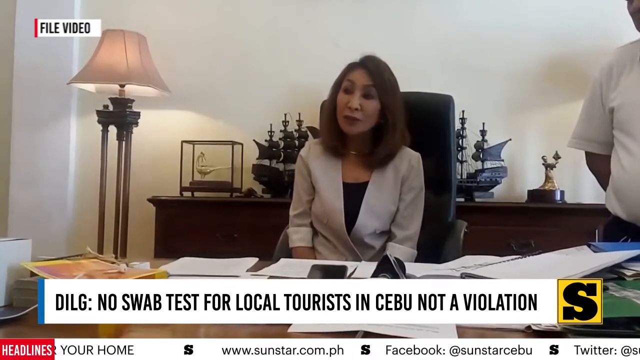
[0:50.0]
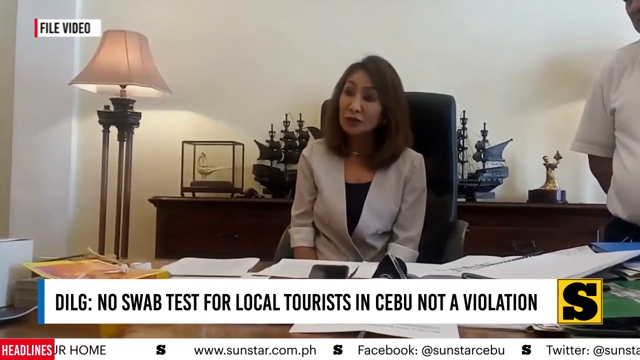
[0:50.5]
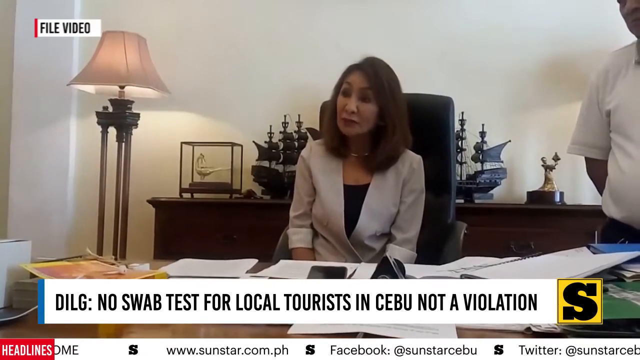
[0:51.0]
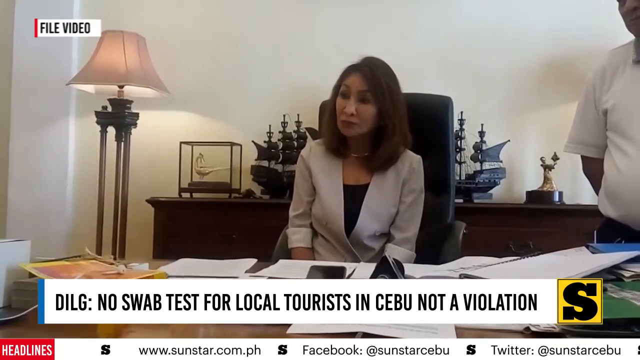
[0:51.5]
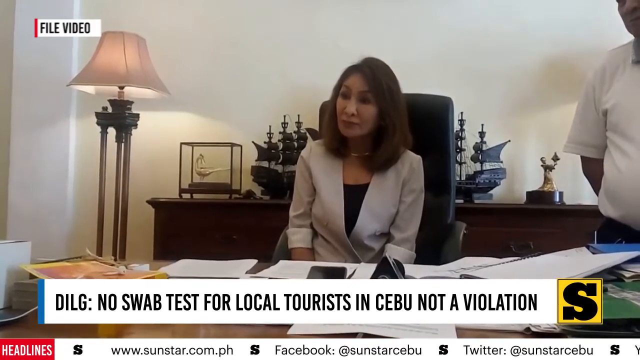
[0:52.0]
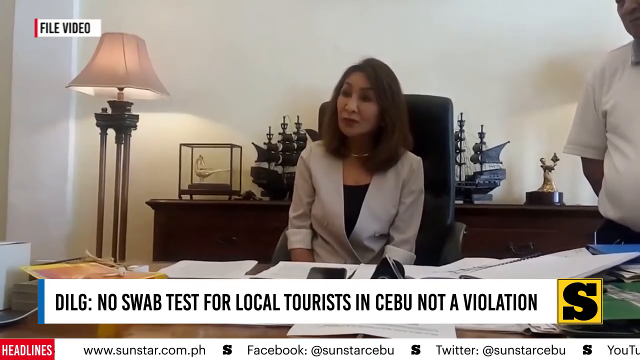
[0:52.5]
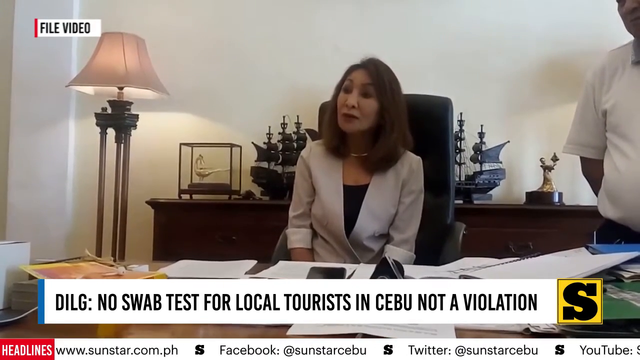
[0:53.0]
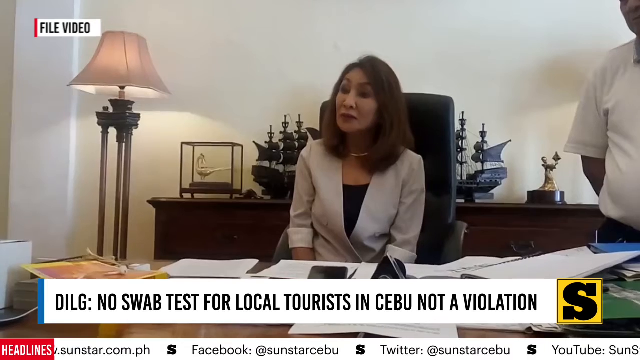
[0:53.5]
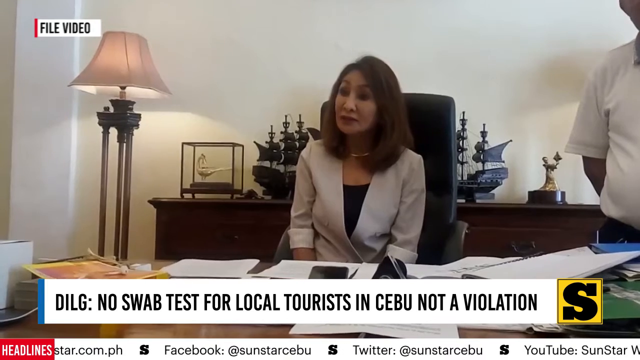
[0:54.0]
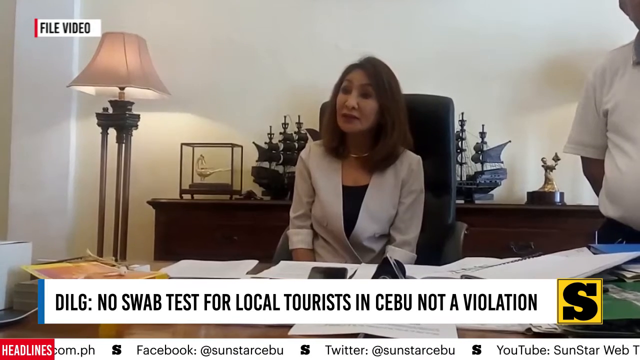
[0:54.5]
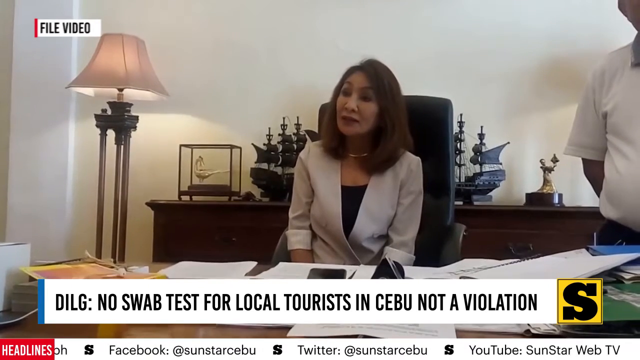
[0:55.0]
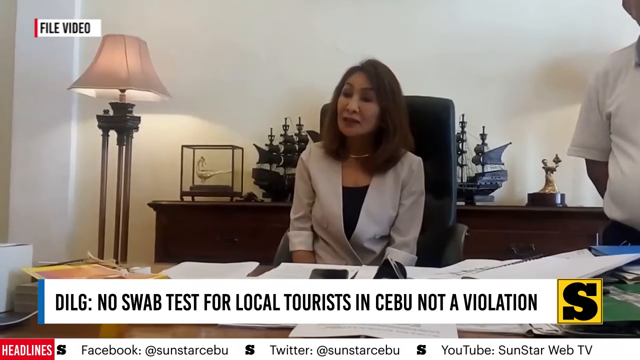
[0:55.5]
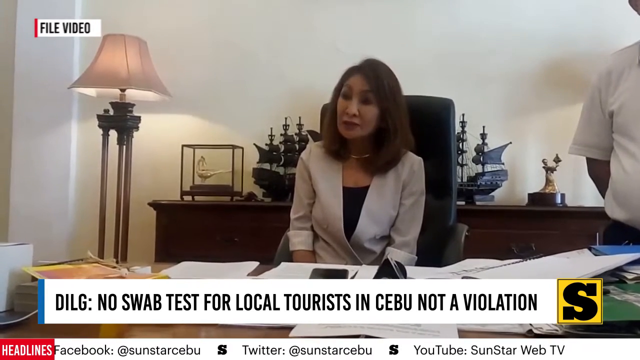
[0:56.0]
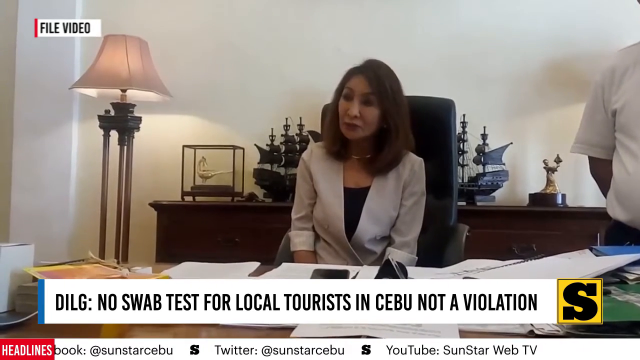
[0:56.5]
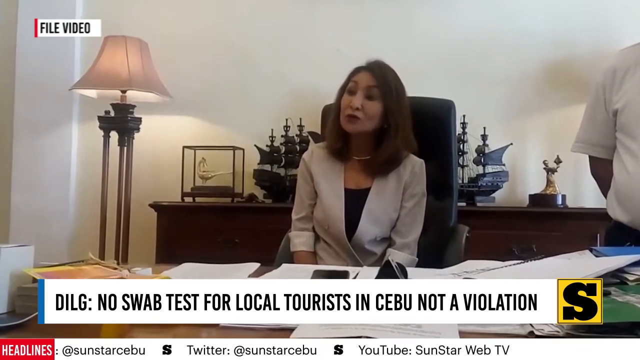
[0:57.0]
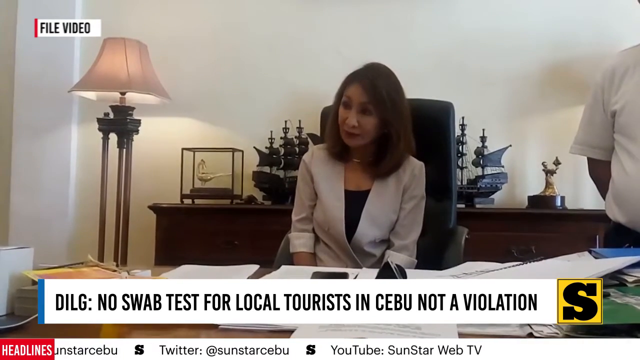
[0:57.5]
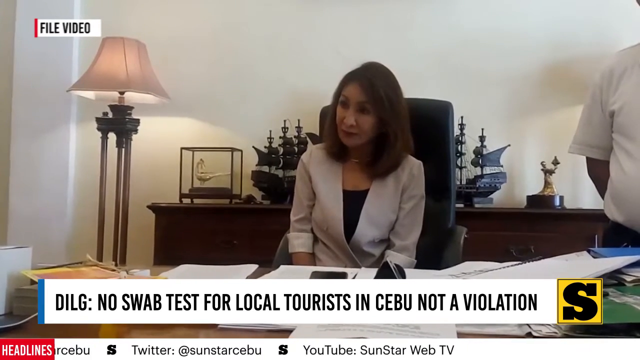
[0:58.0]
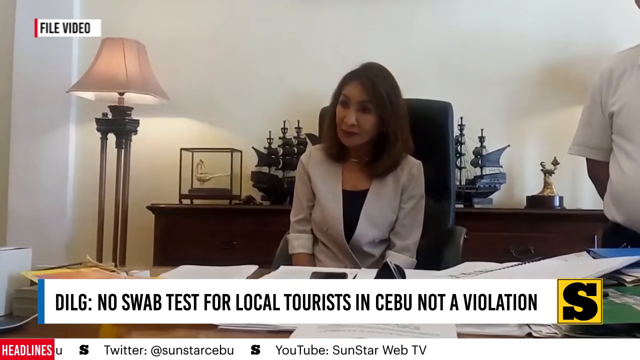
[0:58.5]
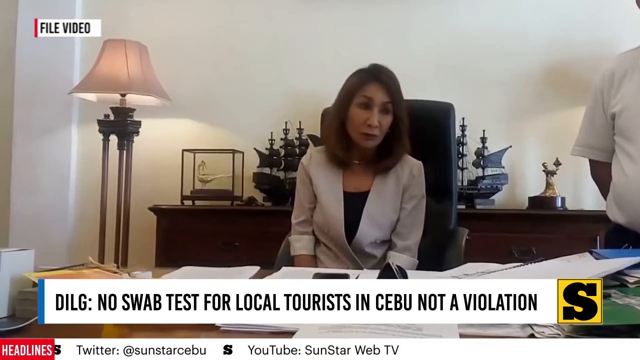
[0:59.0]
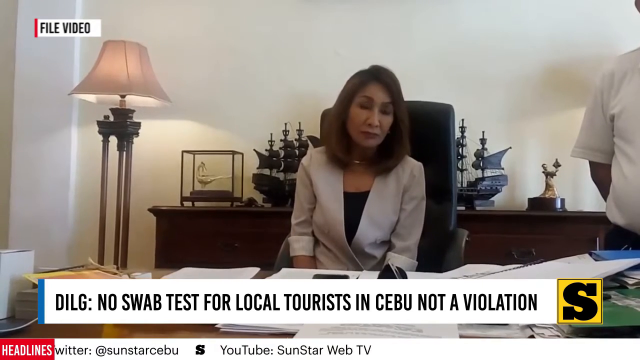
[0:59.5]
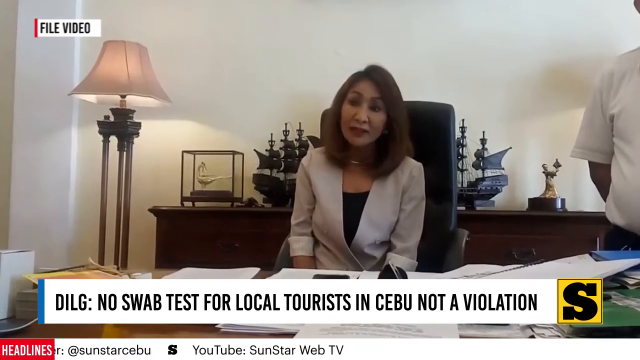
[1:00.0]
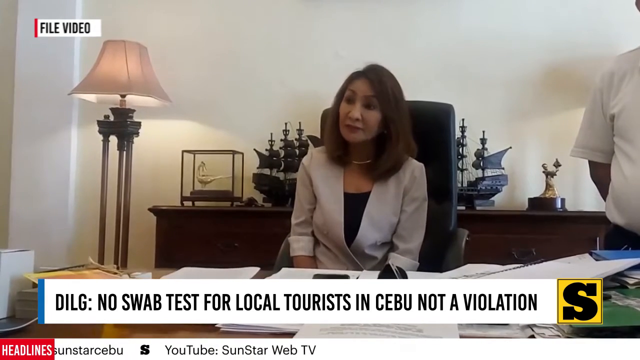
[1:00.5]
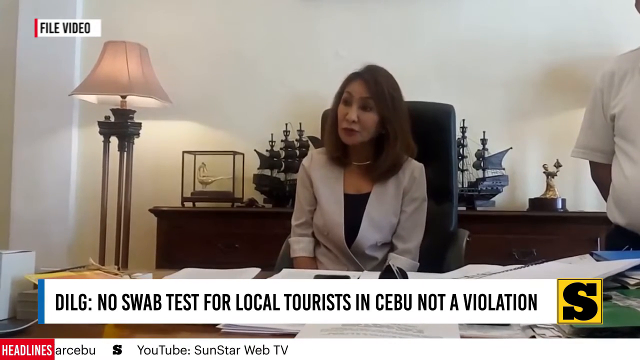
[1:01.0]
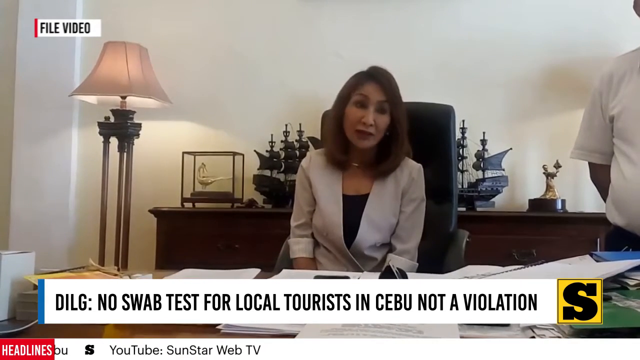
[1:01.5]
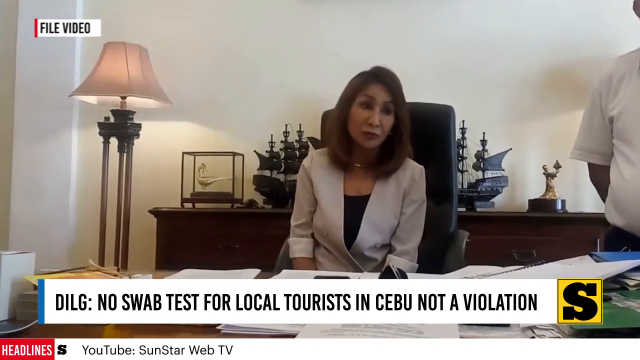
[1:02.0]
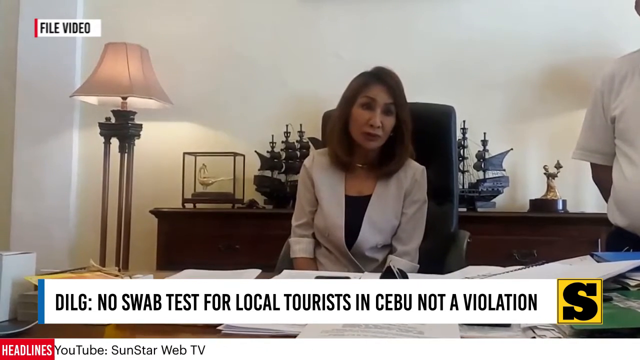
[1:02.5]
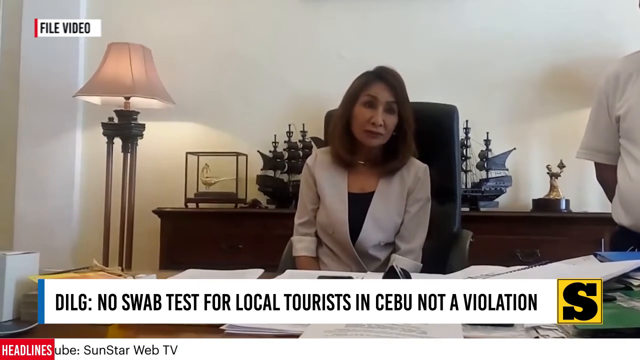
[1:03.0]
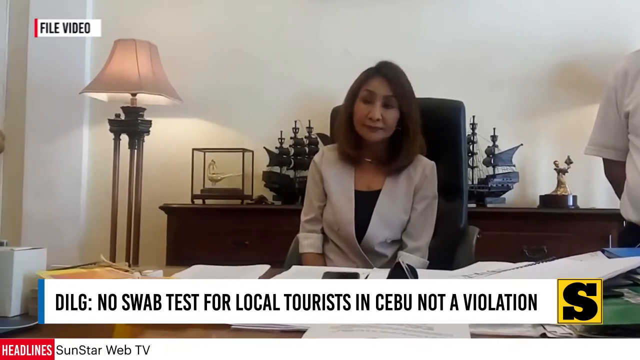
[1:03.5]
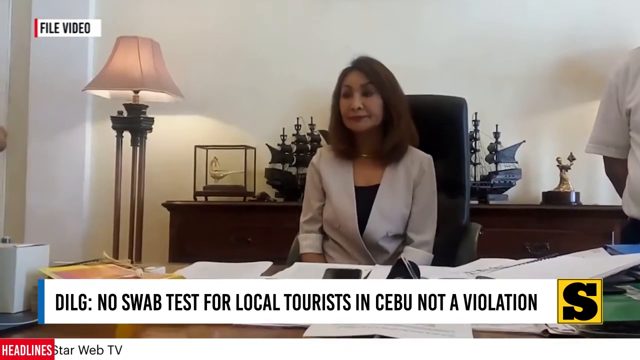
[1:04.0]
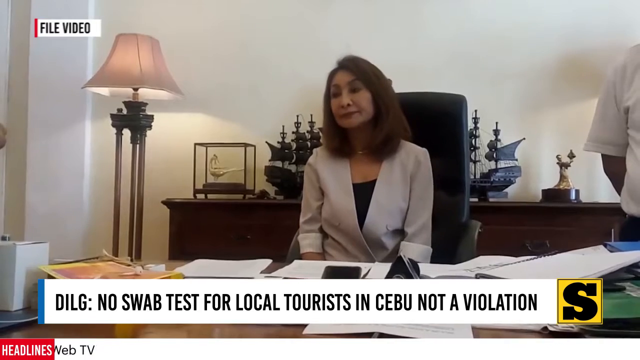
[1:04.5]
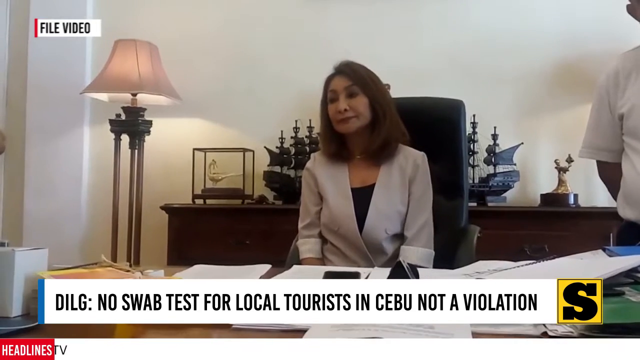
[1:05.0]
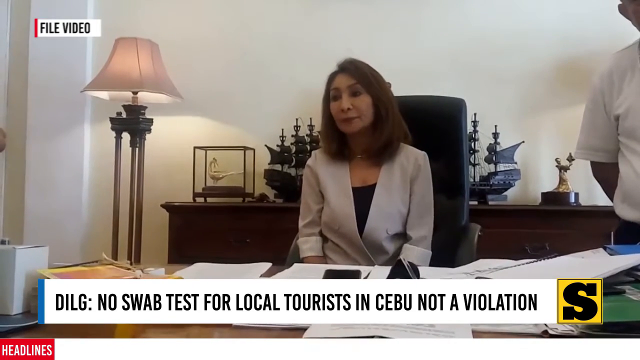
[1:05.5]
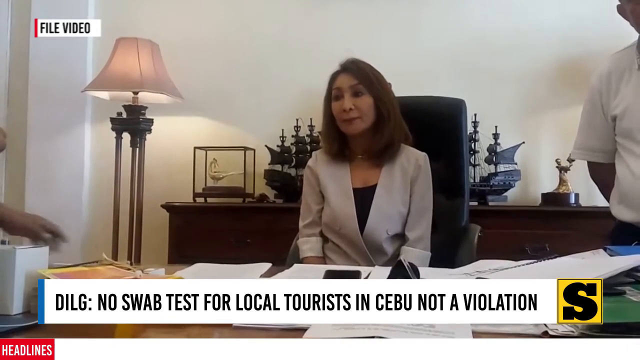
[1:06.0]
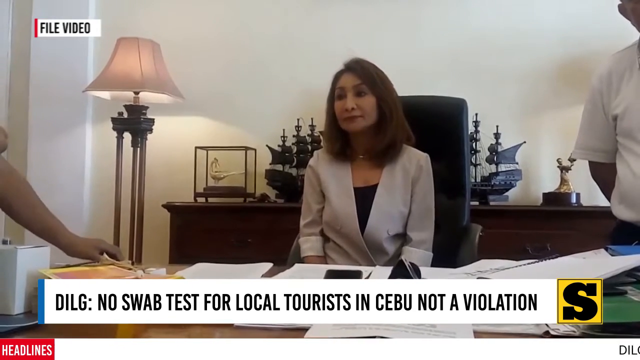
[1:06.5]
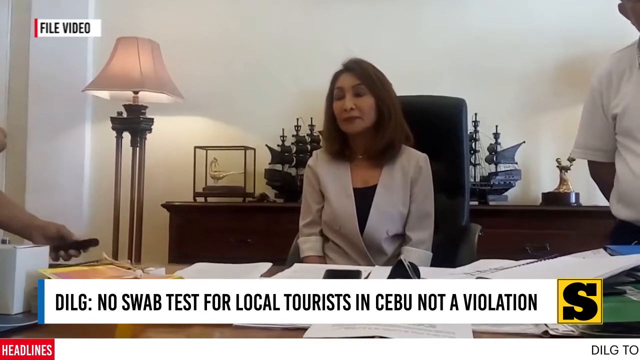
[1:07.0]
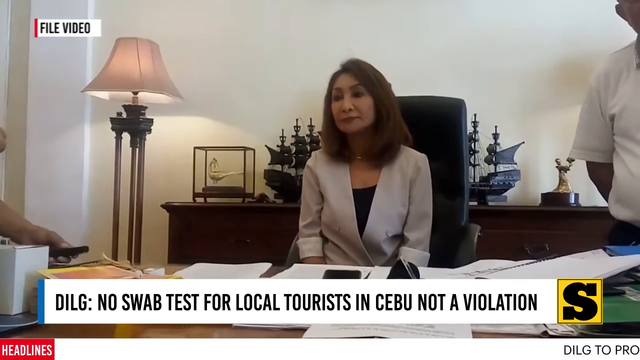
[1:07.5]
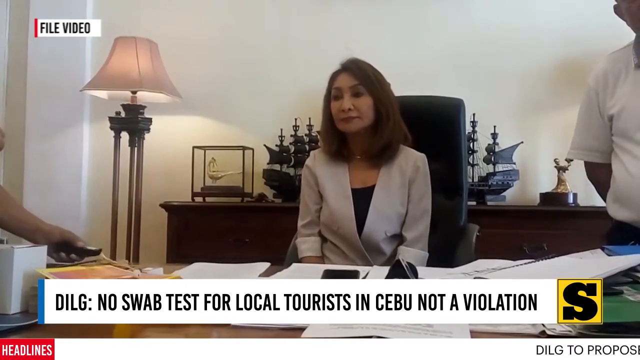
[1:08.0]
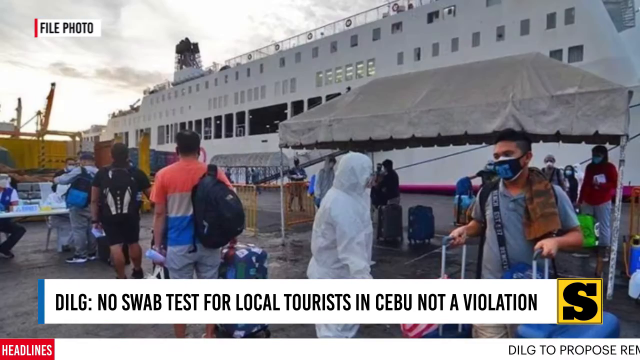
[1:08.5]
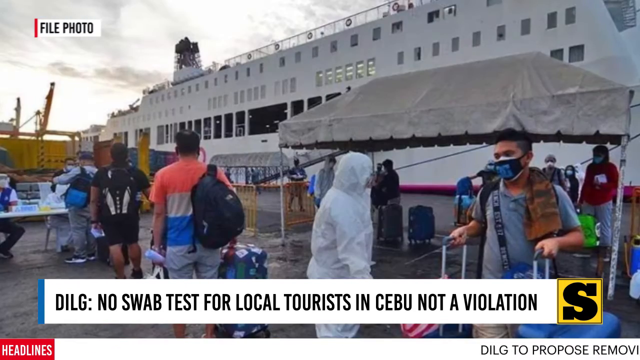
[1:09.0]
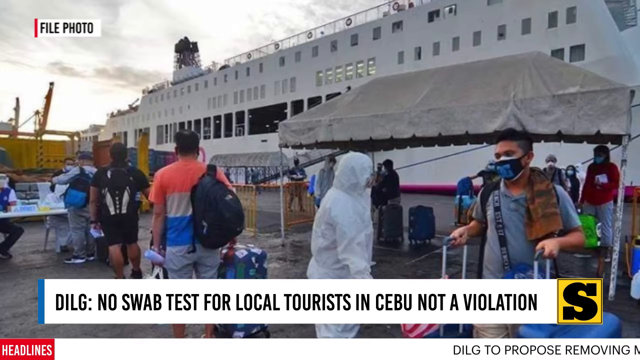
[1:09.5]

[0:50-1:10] The view pans to a woman sitting in a very large office with white walls. She wears a beige blazer over a black blouse, and her desk holds a lot of notebooks and paper. Behind her is a large cabinet with model ships, and a person standing to her right is partially in view. A banner at the bottom reads "DILG no swab test for local tourists in Cebu not a violation", and a tag at the top left reads "file video". The woman looks like some kind of official, and for a good portion of the shot she talks to two reporters. The view then pans to a picture of people outside a ferry boat.